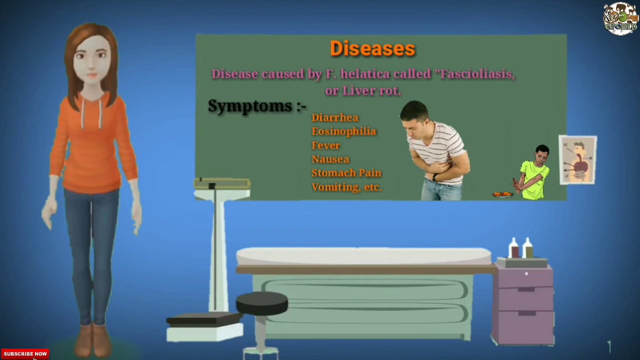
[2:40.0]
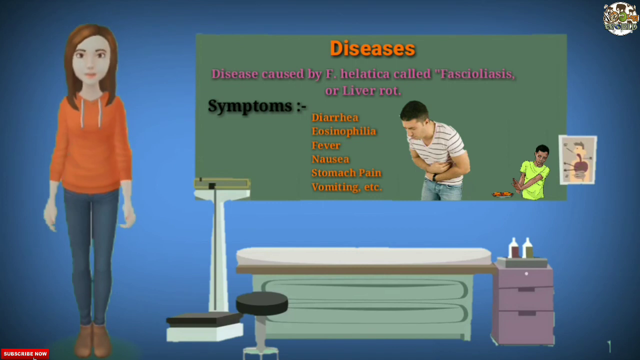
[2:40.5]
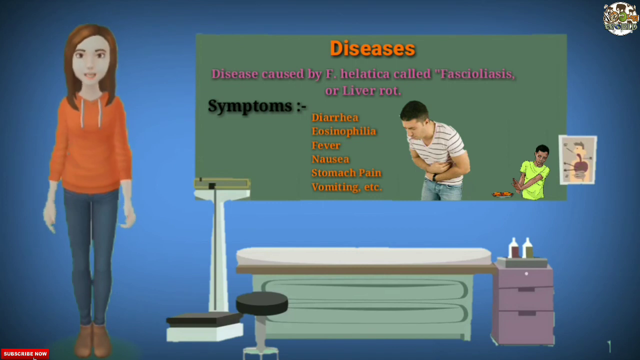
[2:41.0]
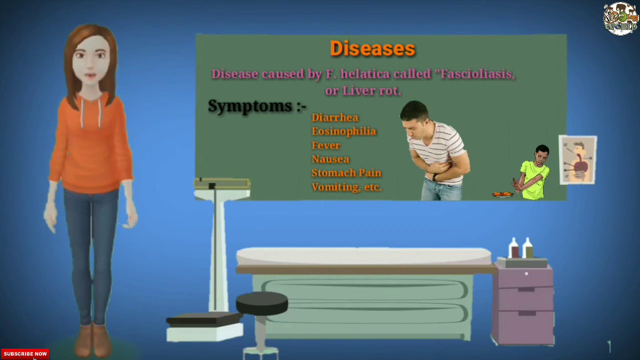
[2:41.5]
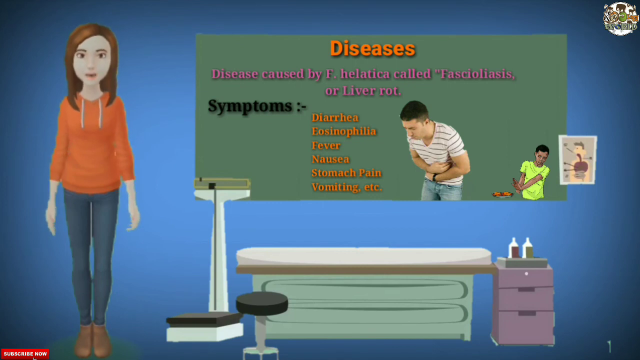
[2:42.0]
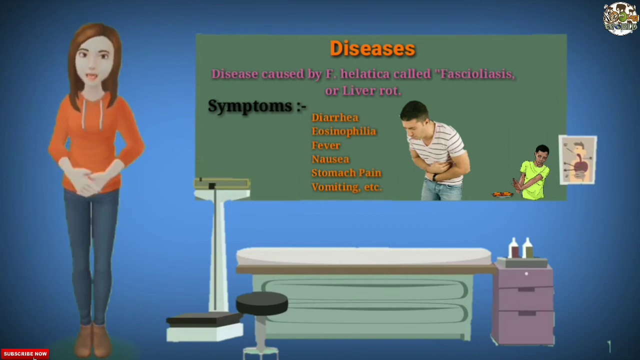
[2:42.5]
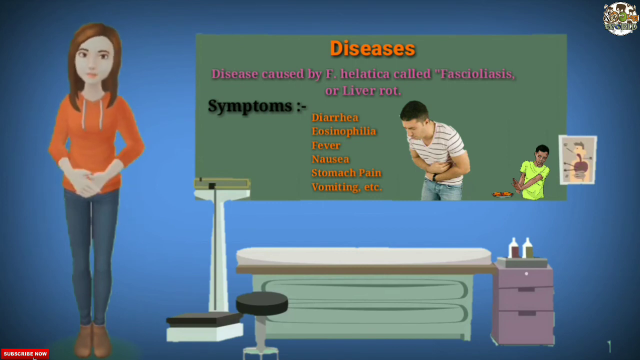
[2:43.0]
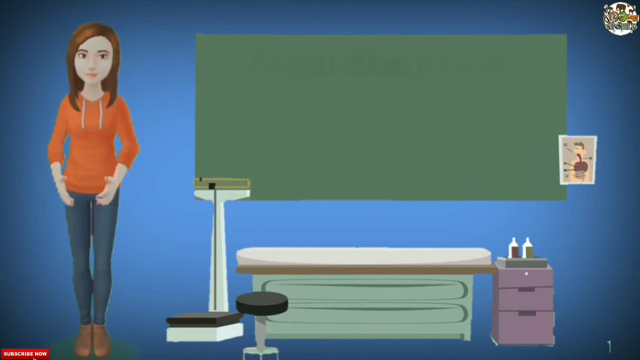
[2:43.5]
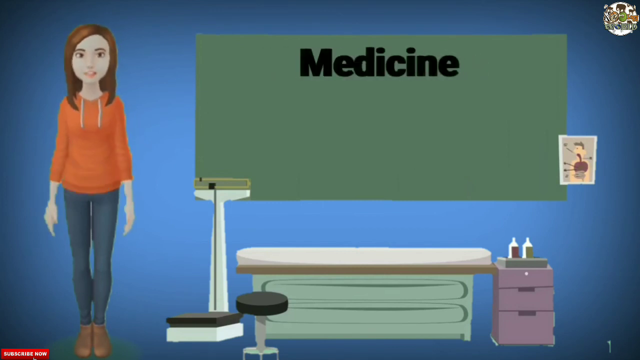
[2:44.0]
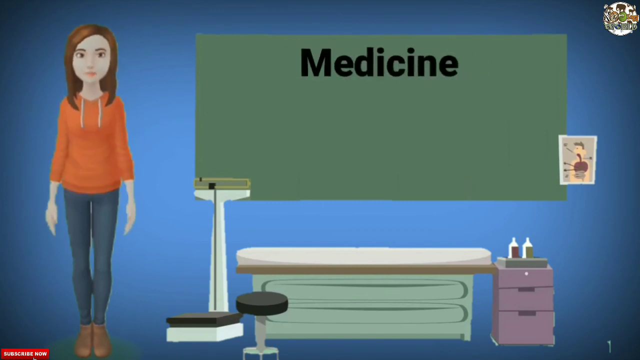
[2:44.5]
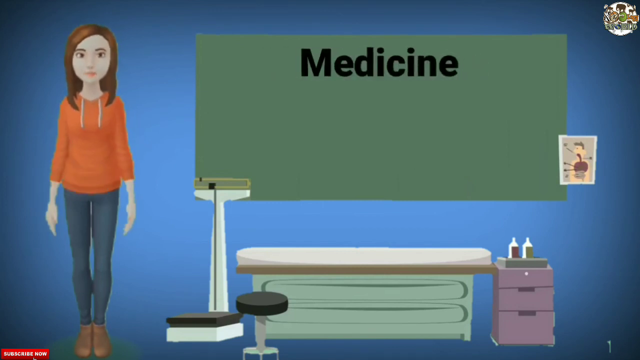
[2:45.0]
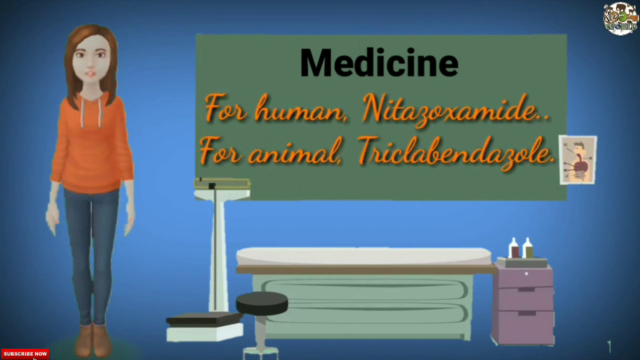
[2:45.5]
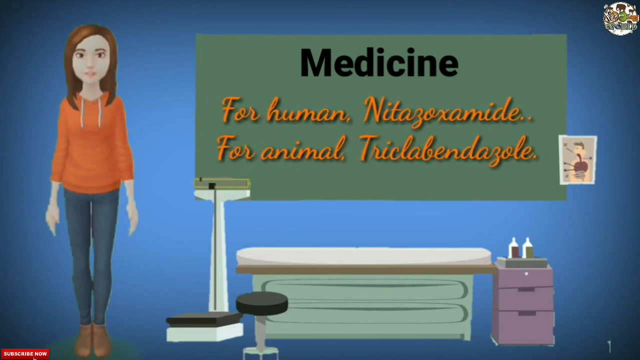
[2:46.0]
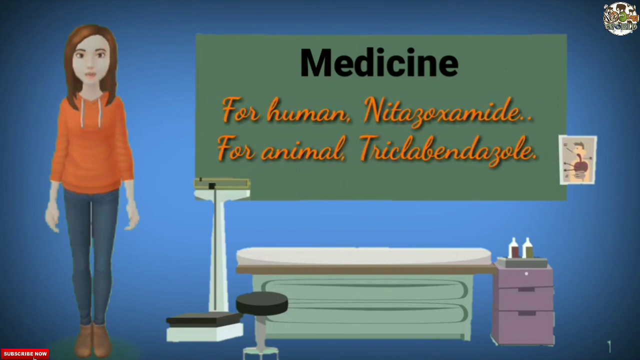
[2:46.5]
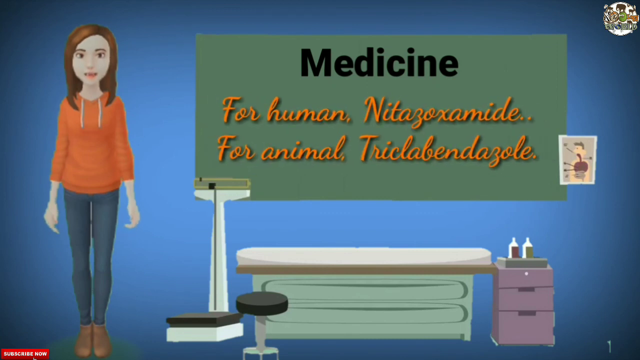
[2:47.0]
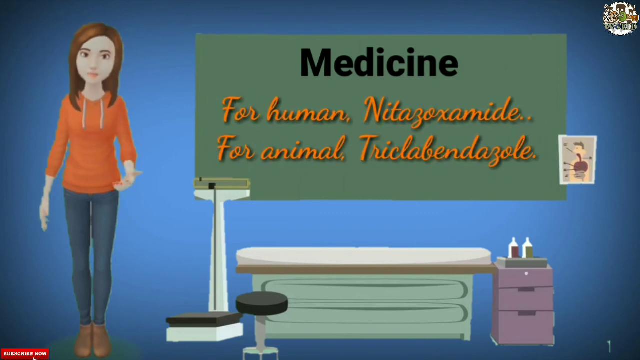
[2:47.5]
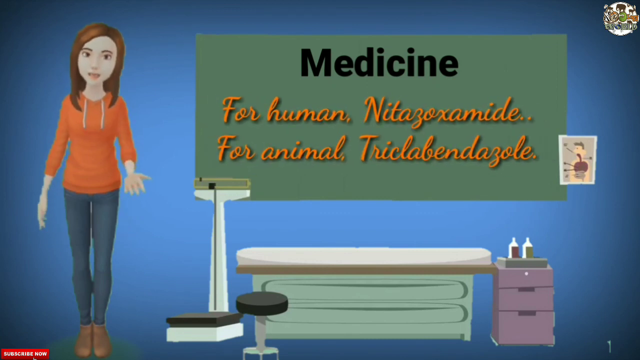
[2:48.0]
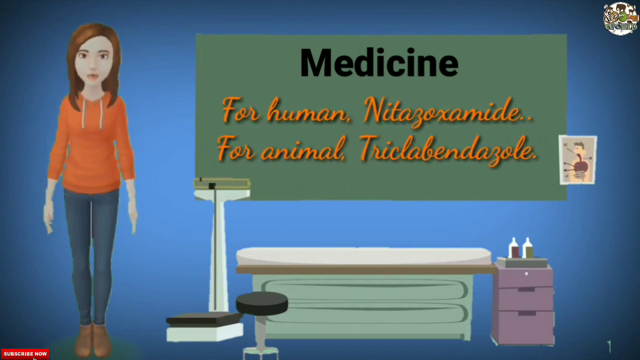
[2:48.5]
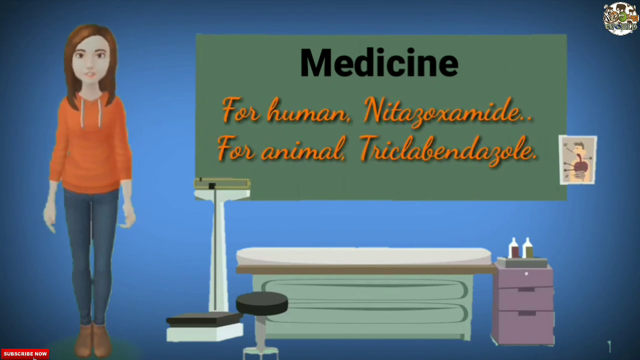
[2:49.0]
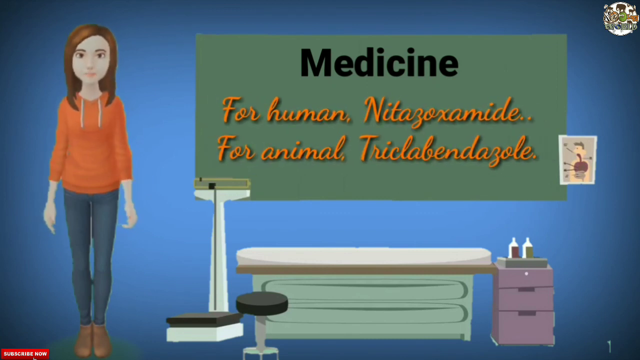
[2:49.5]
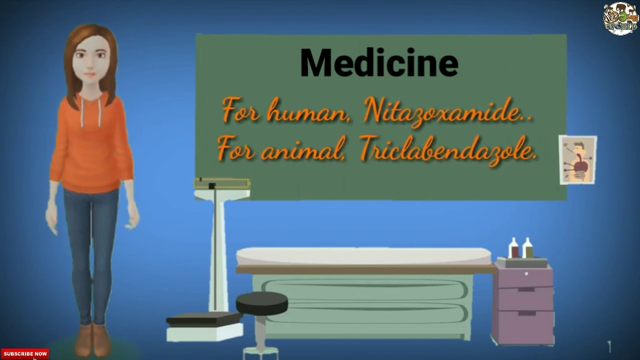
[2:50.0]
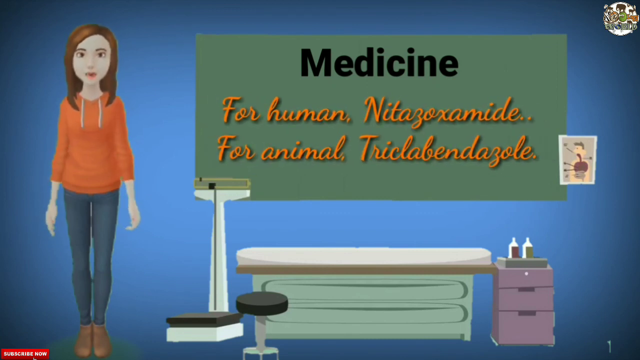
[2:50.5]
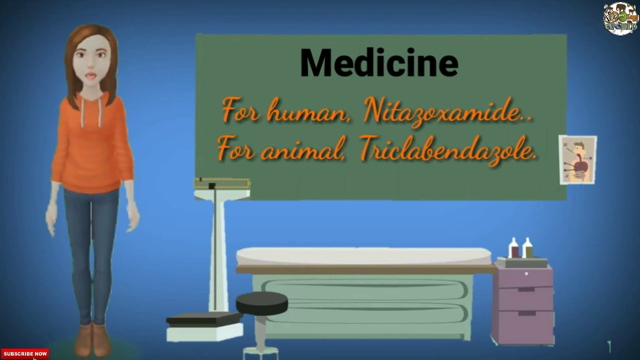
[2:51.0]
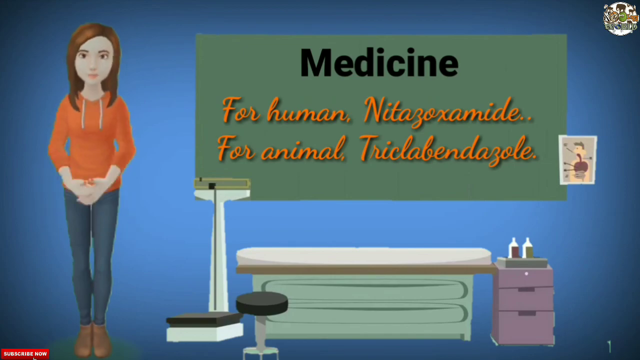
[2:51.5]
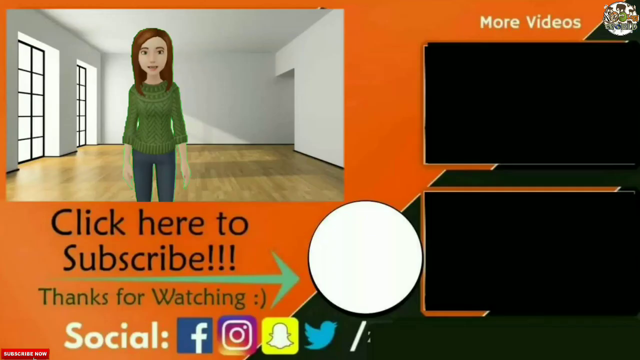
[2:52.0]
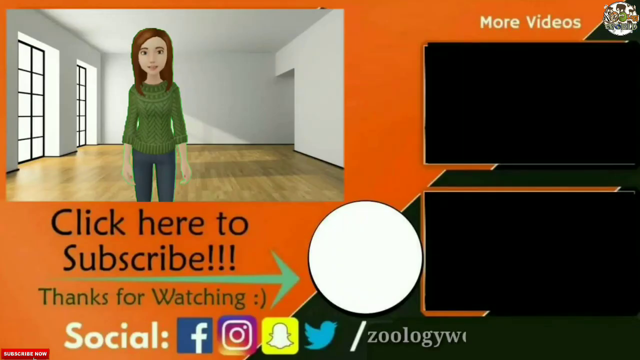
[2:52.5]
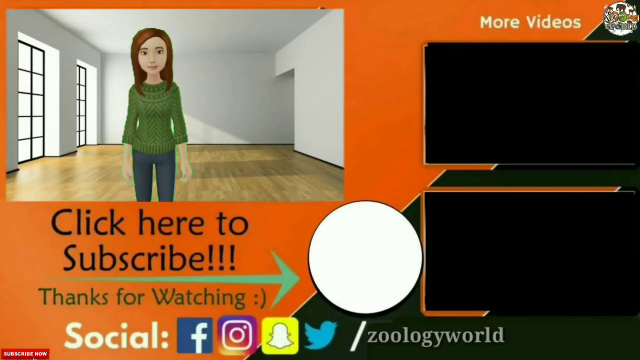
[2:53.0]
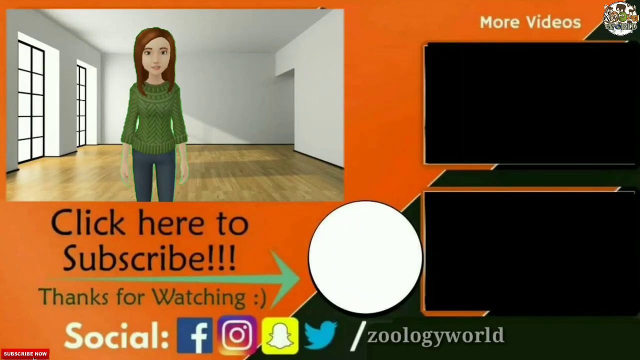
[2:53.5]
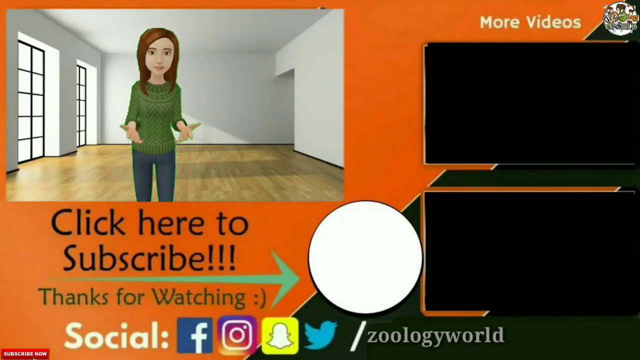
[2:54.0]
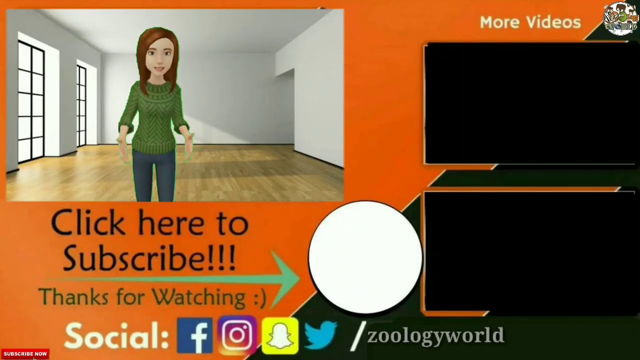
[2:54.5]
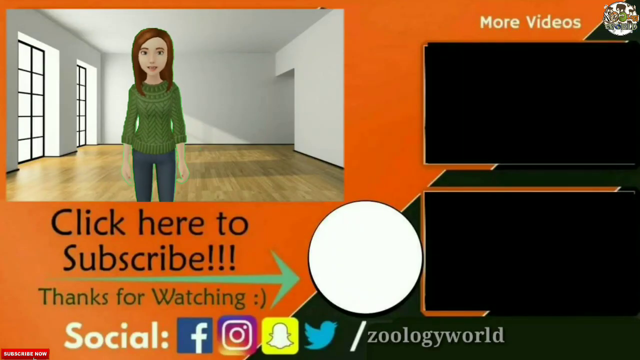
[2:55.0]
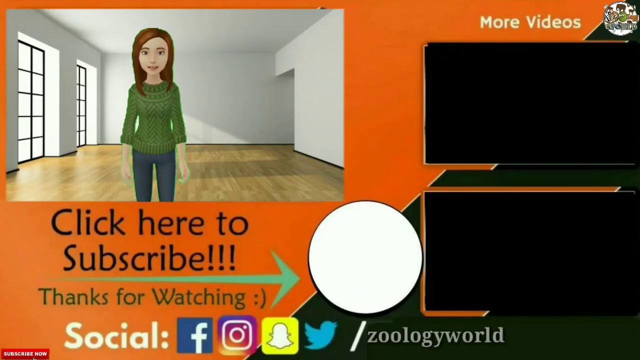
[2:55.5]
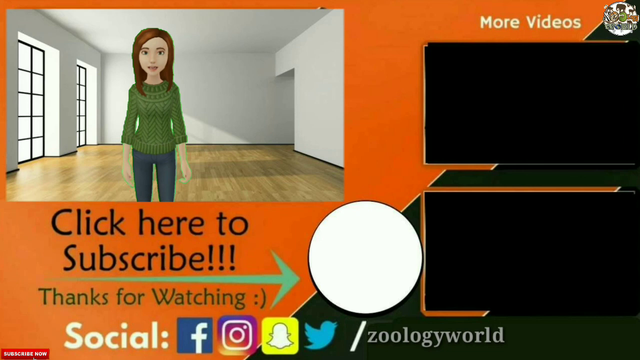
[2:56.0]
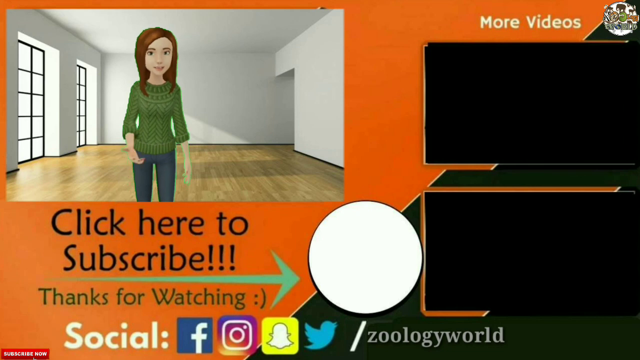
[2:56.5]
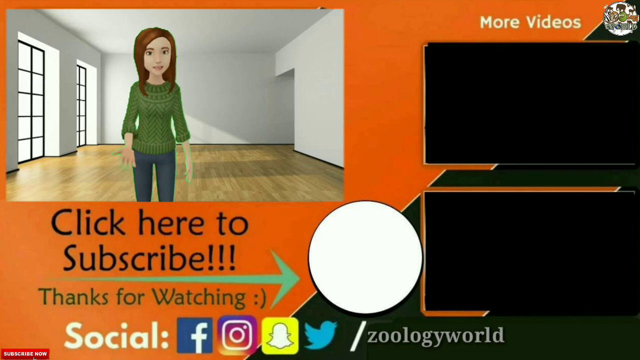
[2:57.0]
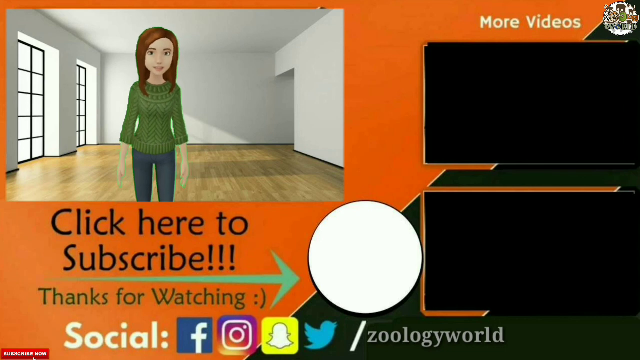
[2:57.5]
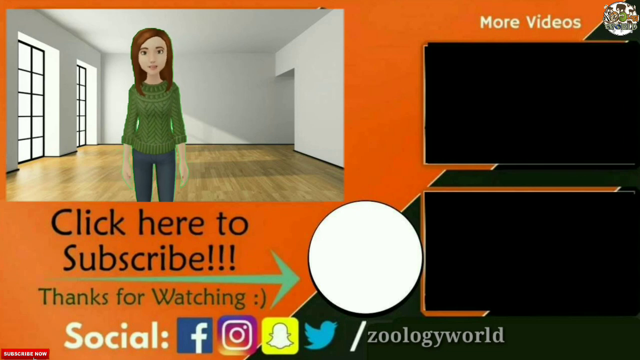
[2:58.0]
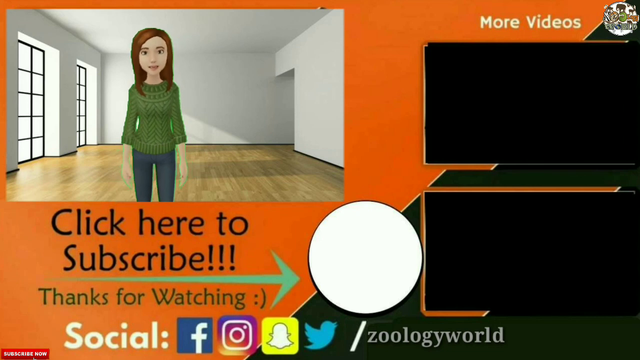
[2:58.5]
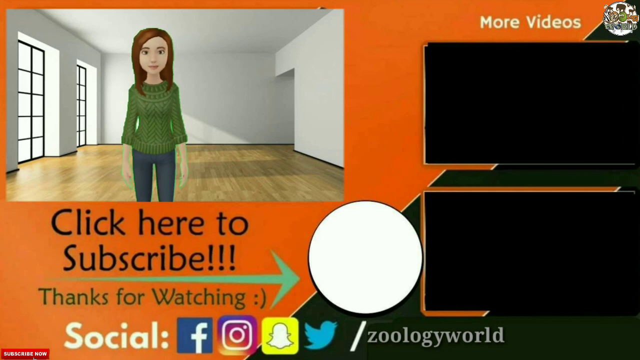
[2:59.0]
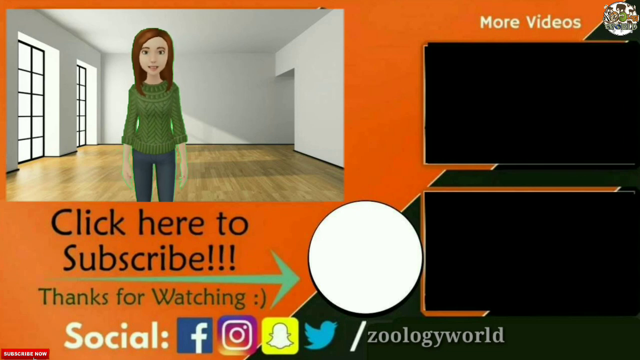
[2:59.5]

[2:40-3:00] On the left side of the screen, an animated teacher talks about the information displayed on a blackboard in an animated doctor's office. The blackboard is titled "diseases" in orange. In purple, it reads "disease caused by F. hepatica called fascioliasis or liver rot." The subheading "symptoms" is written in black, then "diarrhea, eosinophilia, fever, nausea, stomach pain, vomiting, etc." appears in orange as bullet points below. A cropped stock image of a man holding his stomach in pain is placed next to the symptoms, with a stock image of a boy refusing food next to the man. Stuck onto the blackboard next to the boy seems to be a small caricature of the human digestive system. The woman clasps her hands and the blackboard text changes to "medicine", reading in orange cursive "for human nitrazoxamide" and below it "for animal triclobendazole." She clasps her hands together again, and the video switches to show the AI woman in an empty studio apartment in the top left corner of the screen. Below her, on an orange background, is the text "click here to subscribe, thanks for watching", with a green arrow pointing toward a white circle. Next to this are two black boxes showing clips from other videos on the YouTube channel. Below the "thanks for watching" text are logos for Facebook, Instagram, Snapchat and Twitter with "/Zoology World". "More videos" is written in the top right corner, and the Zoology World logo is tucked into the top right corner.